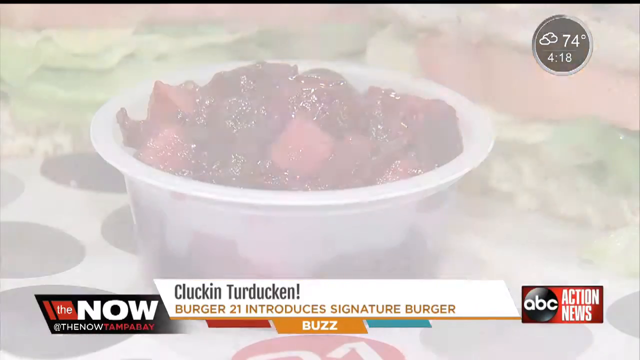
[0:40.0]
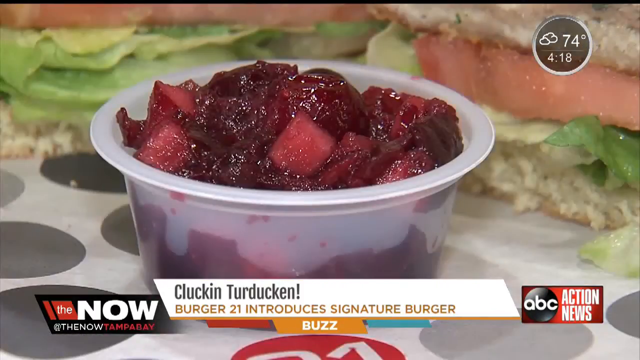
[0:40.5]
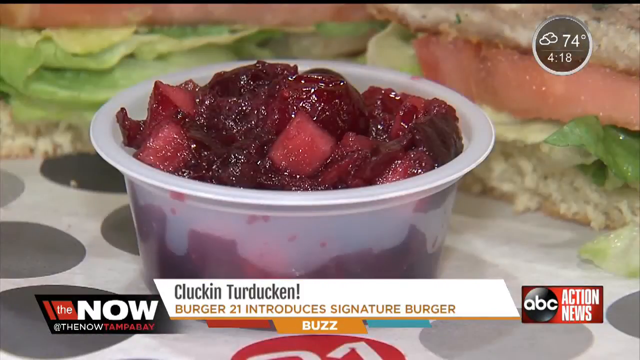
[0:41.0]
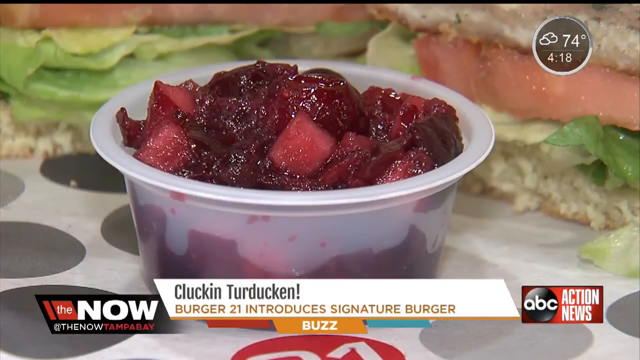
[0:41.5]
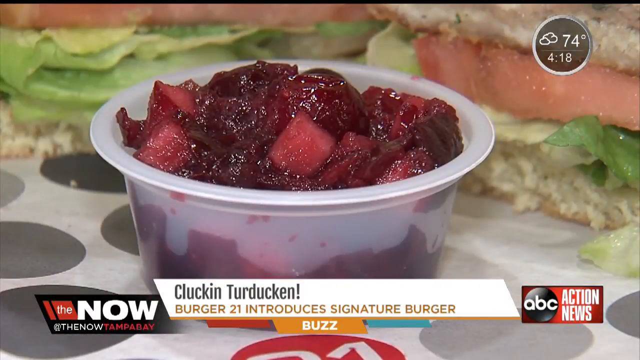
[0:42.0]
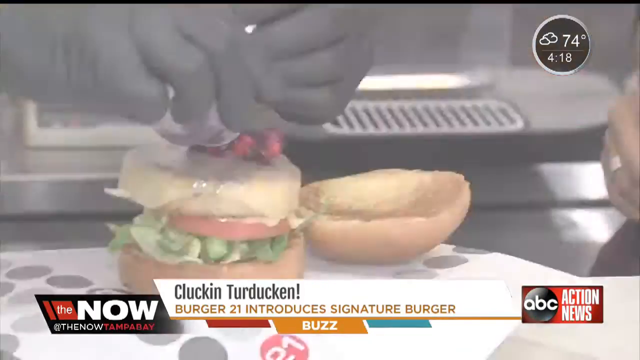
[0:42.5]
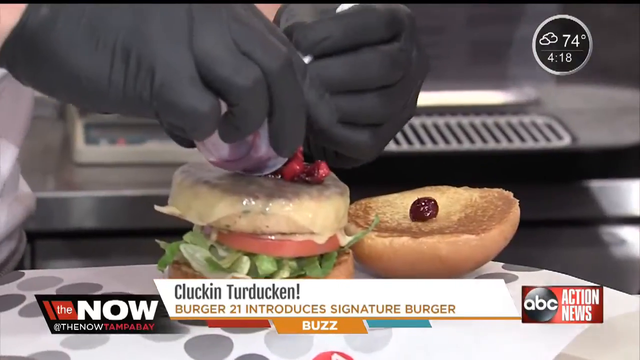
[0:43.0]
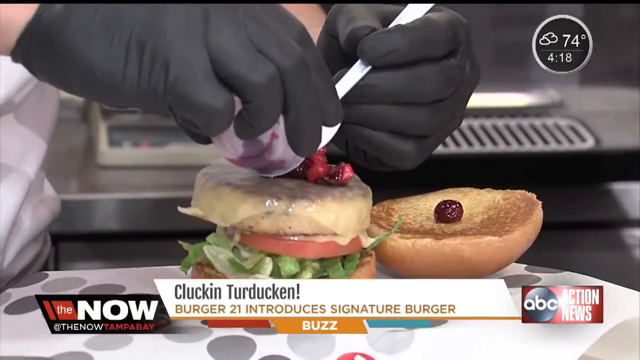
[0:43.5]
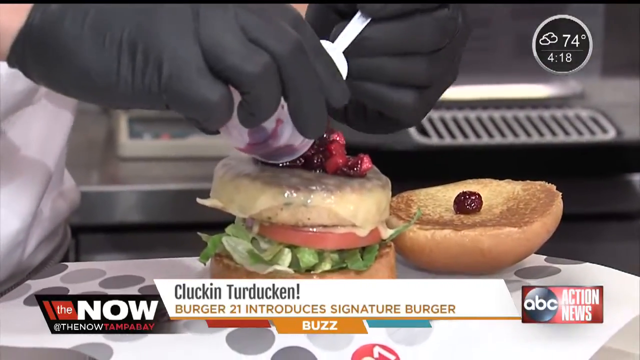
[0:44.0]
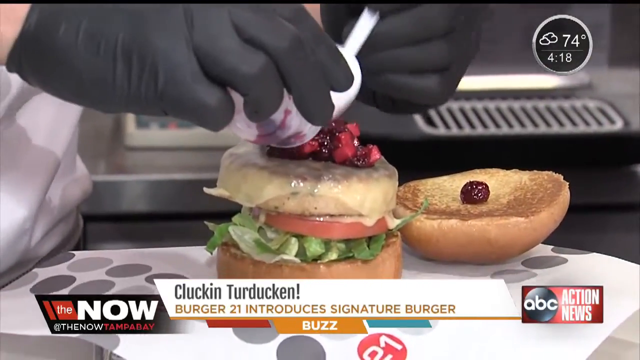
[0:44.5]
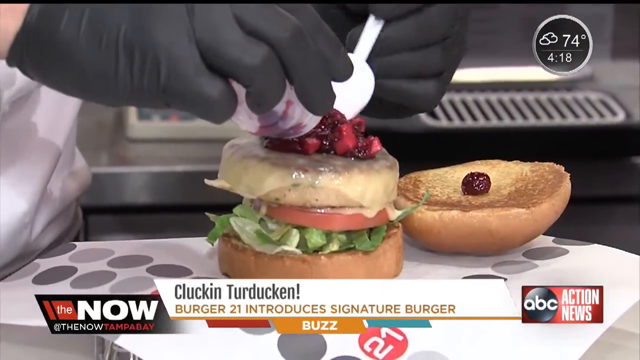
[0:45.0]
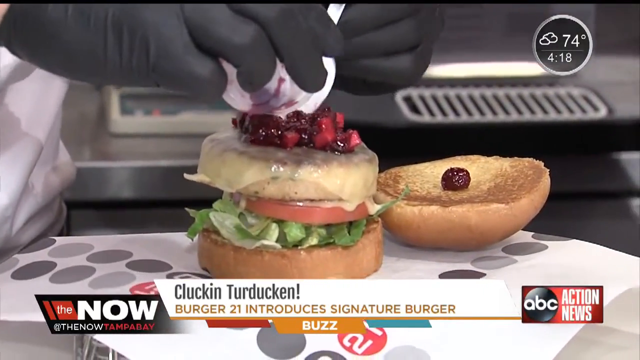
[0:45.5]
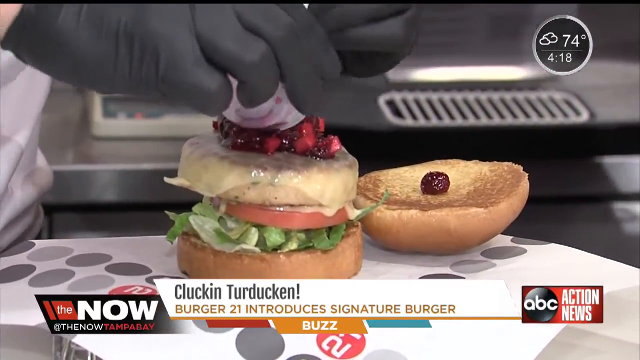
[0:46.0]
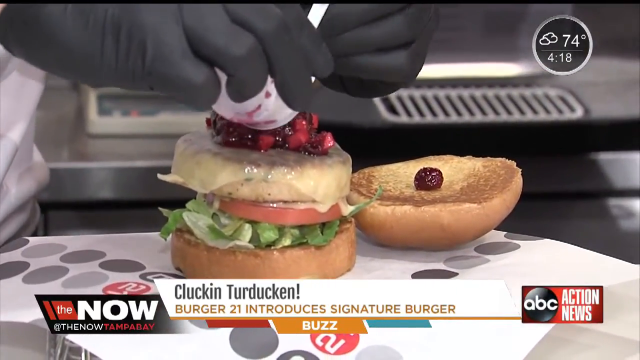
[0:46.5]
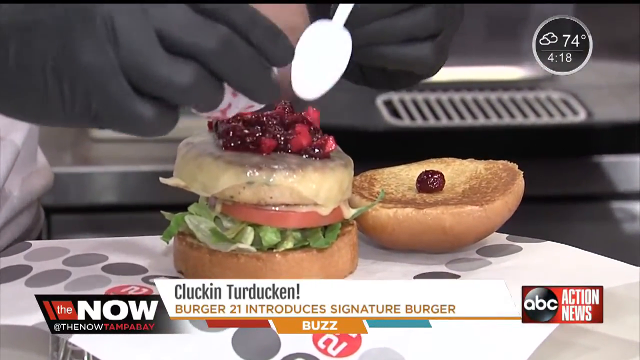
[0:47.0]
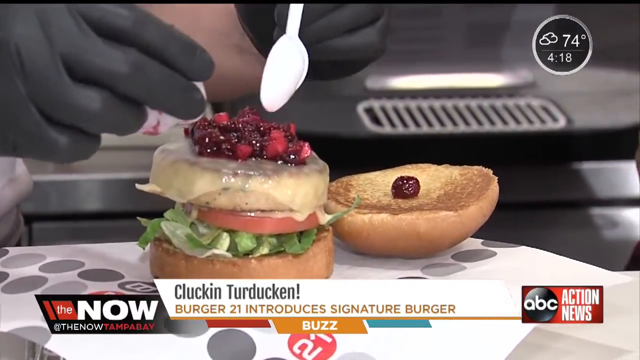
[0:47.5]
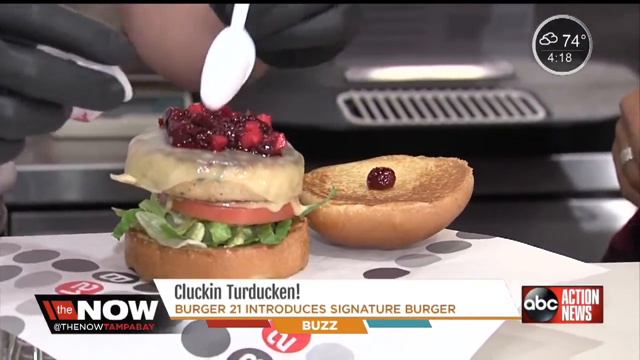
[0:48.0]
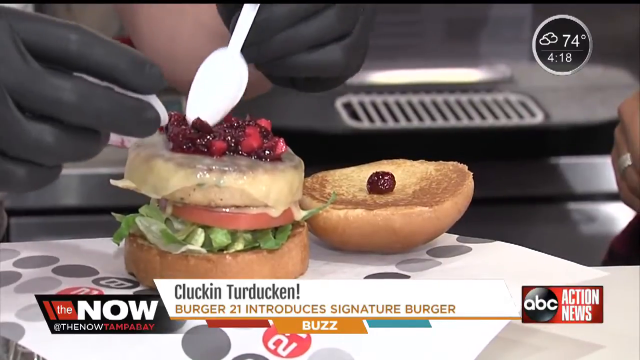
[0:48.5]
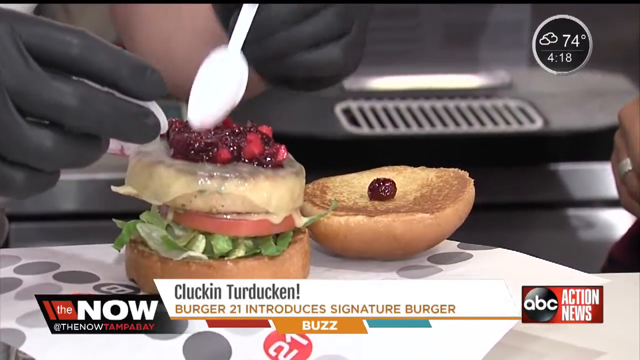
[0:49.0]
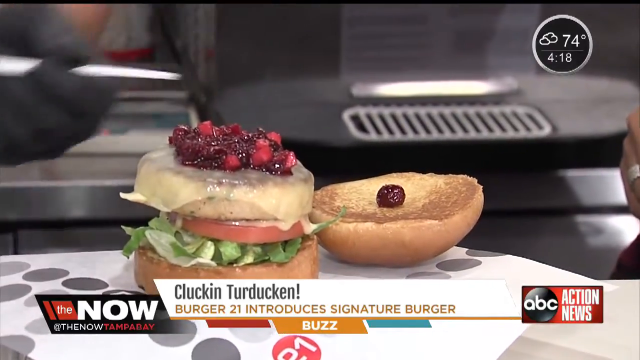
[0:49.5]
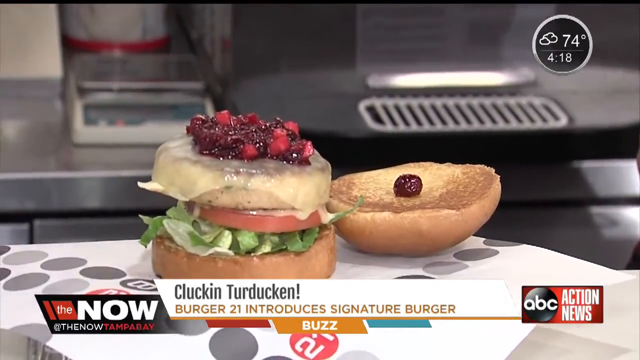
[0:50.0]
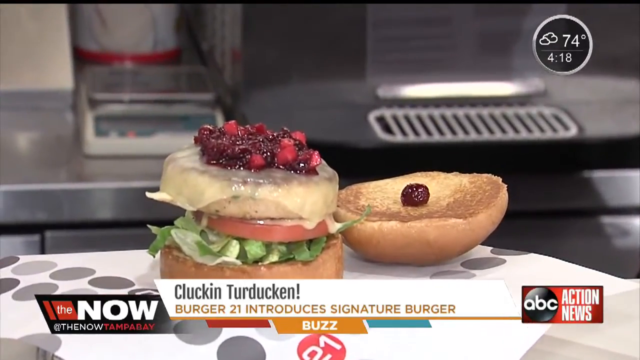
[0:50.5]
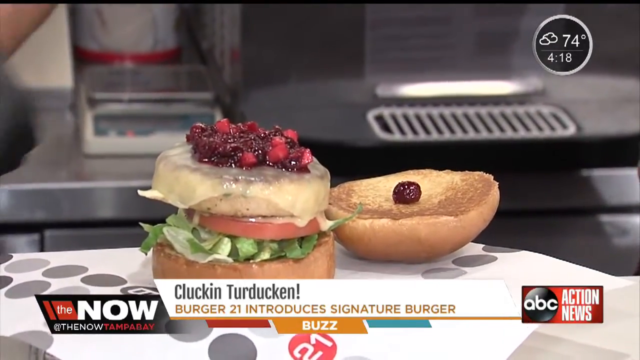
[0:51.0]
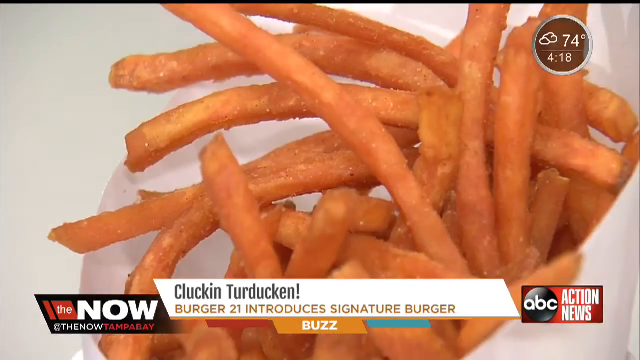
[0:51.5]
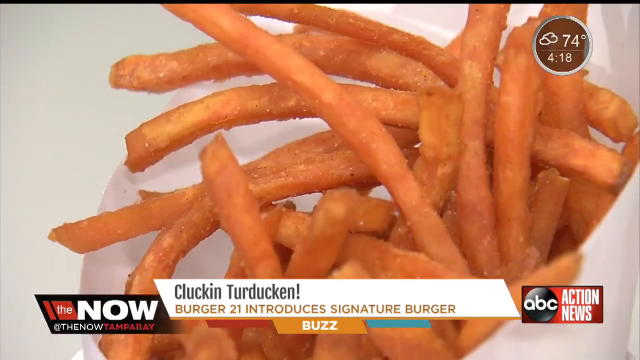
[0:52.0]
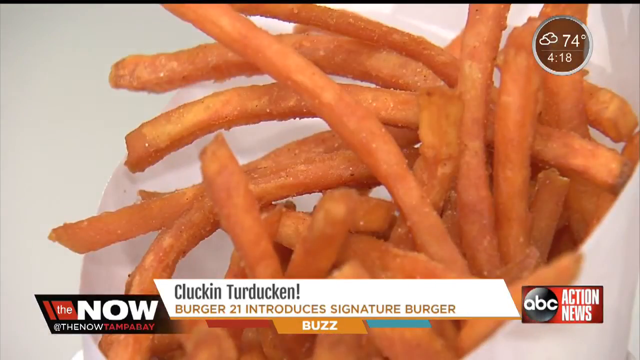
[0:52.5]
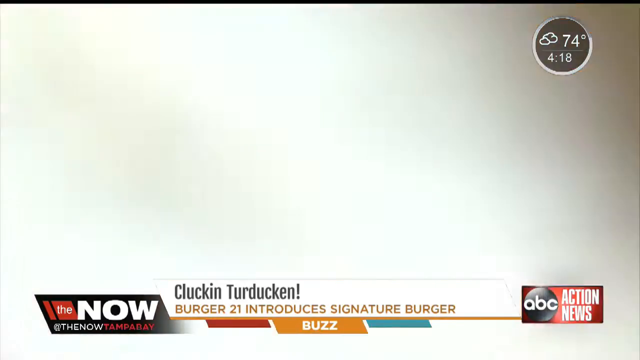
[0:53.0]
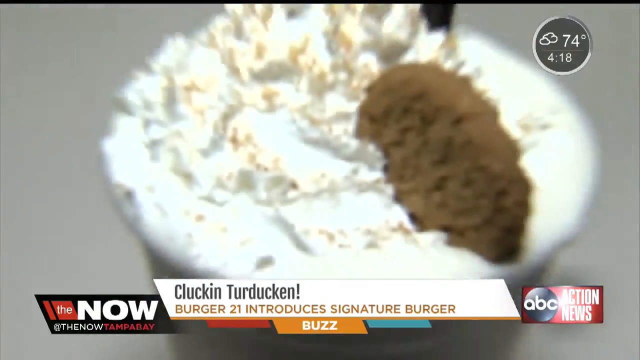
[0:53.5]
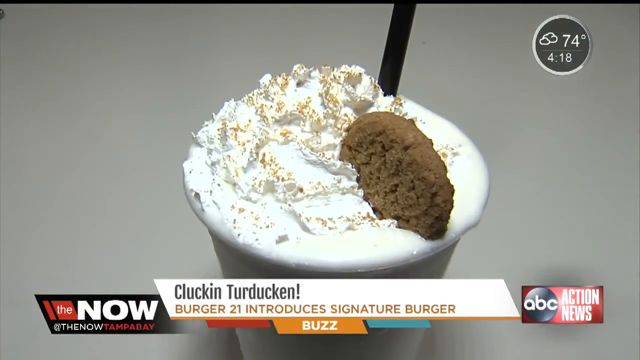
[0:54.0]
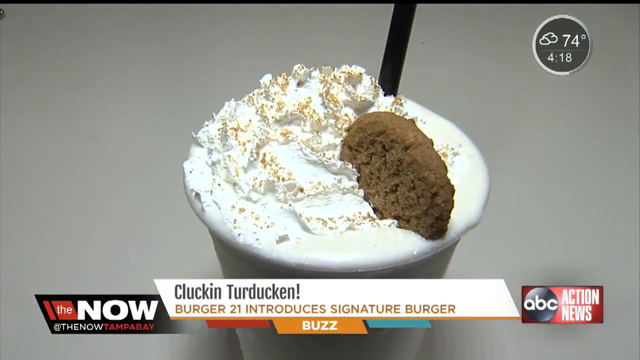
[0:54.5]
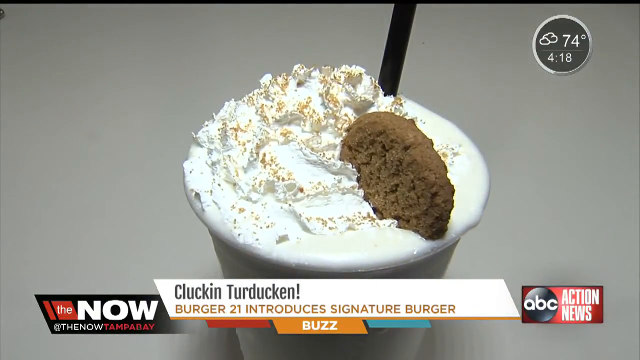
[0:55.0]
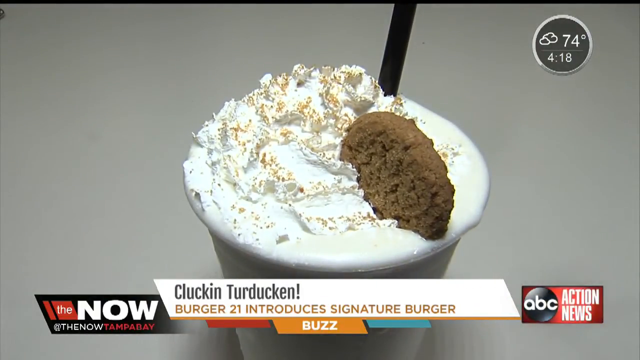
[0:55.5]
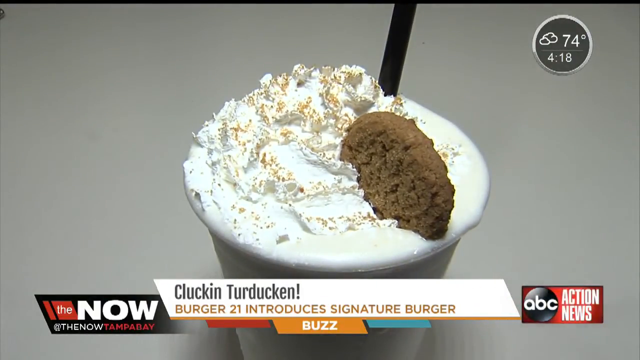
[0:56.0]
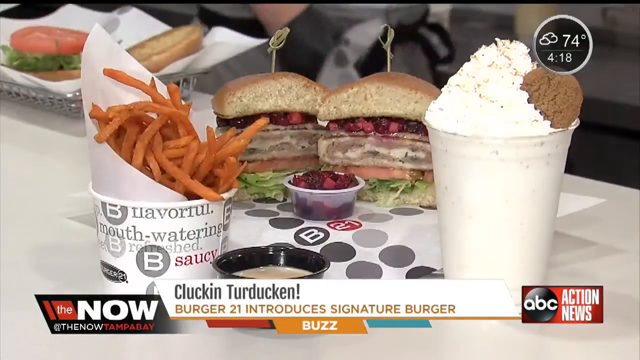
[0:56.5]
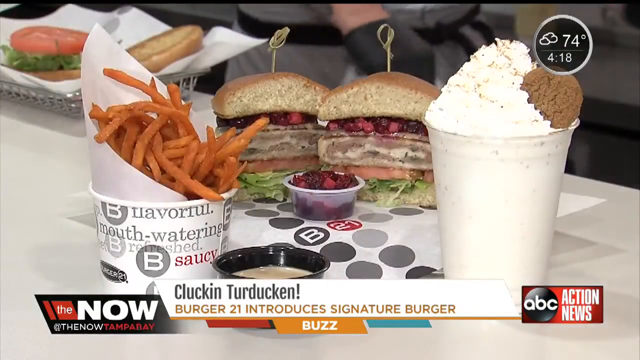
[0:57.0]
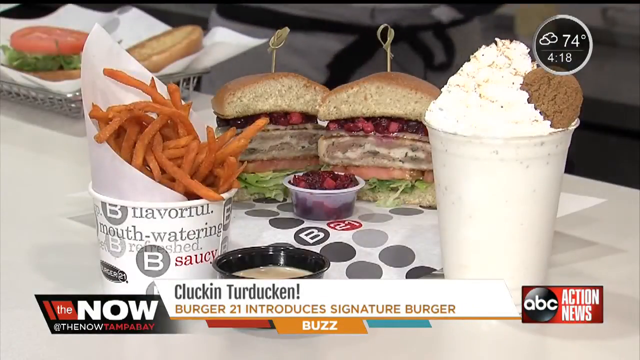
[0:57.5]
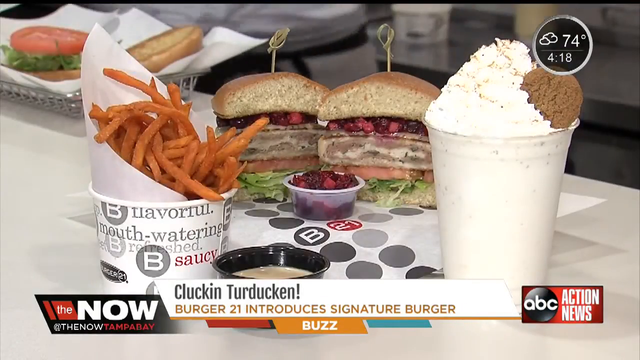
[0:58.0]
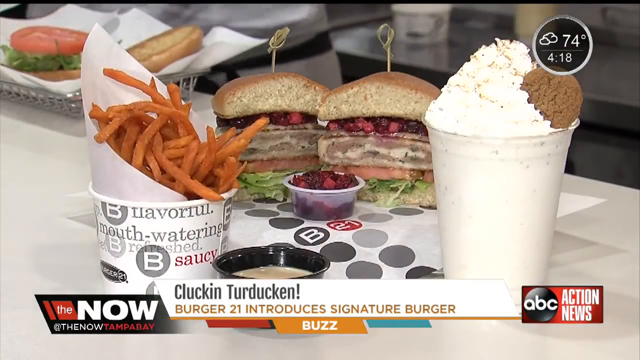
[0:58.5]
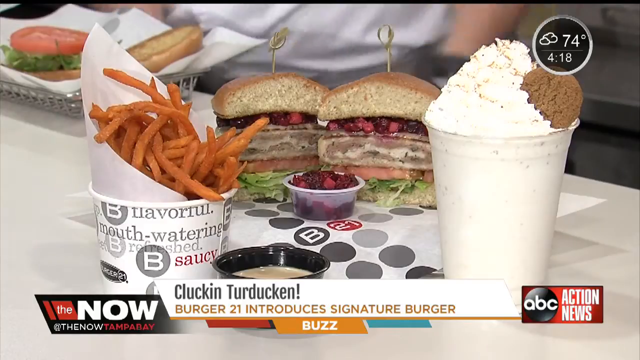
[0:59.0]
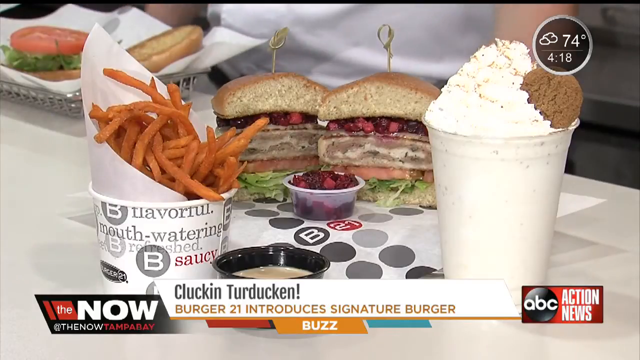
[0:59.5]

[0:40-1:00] A bowl with something red inside is shown. The chef picks up the bowl and pours its contents on top of the patty, and one piece falls onto the roll next to the burger. Chips are shown, then a drink with a lot of cream, a biscuit inside, and something brown sprinkled on top of the cream, probably biscuit crumbs. There is a black straw. On the table are two burgers; next to them are a bowl with the red stuff inside, a cup holding a drink with a lot of cream and a biscuit, and a small bowl of sauce with potato chips next to it. Next to the burgers is a plate with another burger that is not yet done, and the chef is standing behind the table.